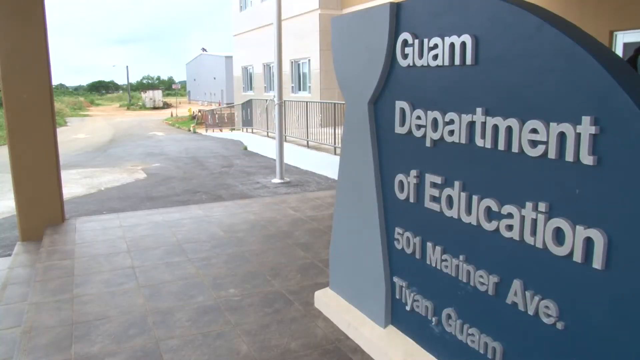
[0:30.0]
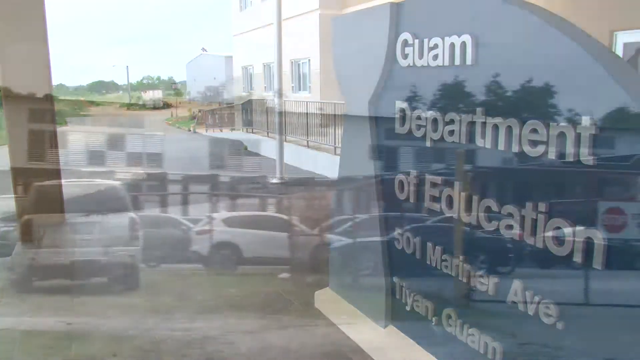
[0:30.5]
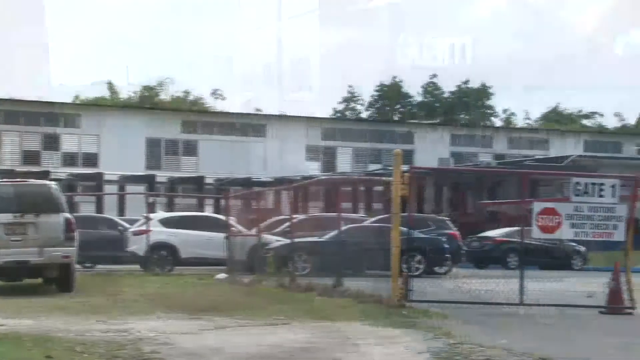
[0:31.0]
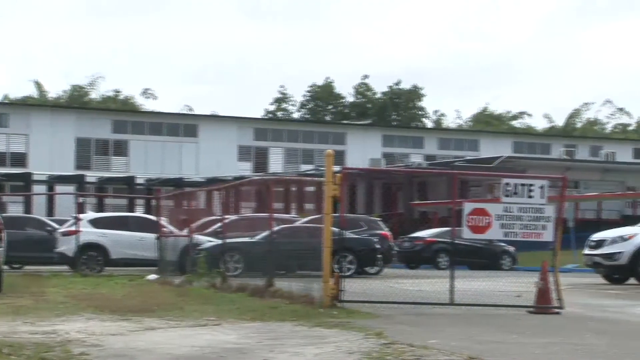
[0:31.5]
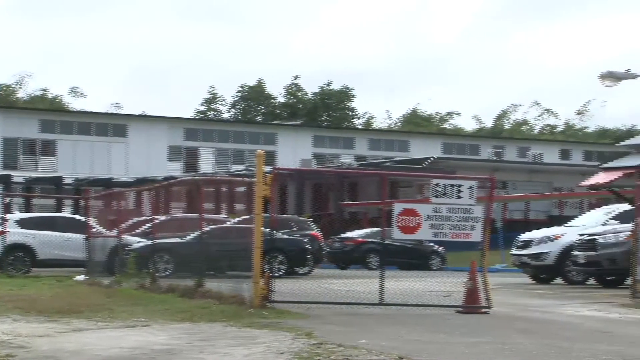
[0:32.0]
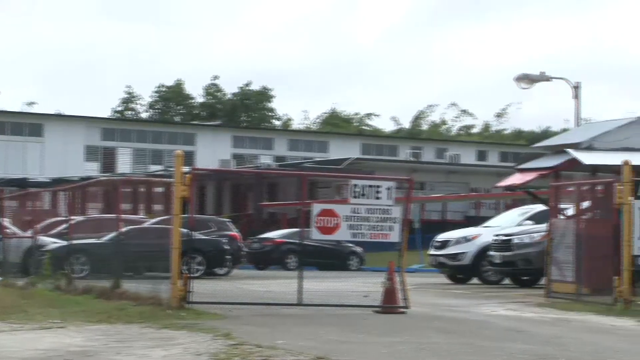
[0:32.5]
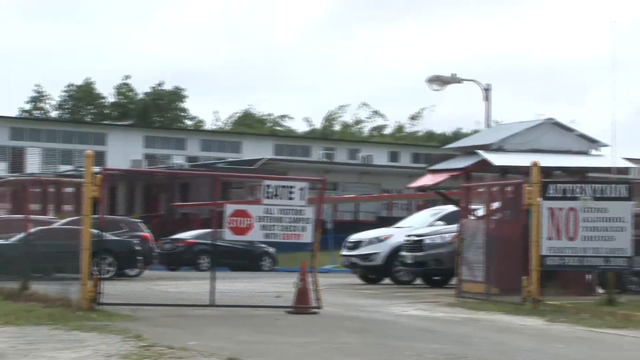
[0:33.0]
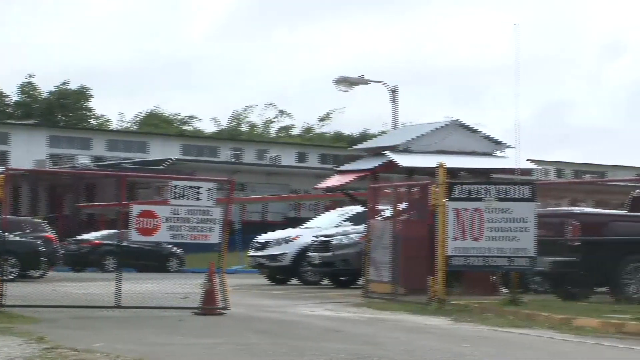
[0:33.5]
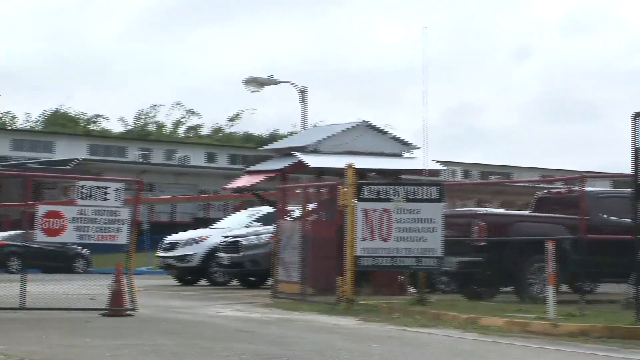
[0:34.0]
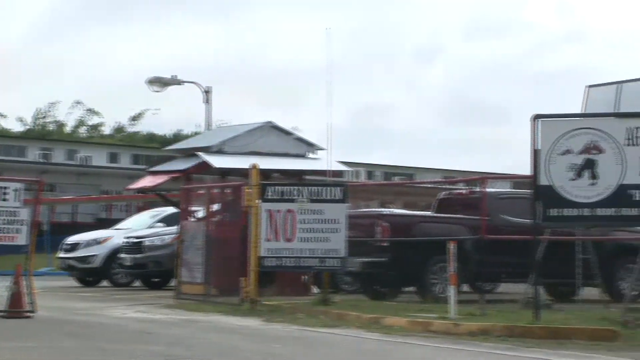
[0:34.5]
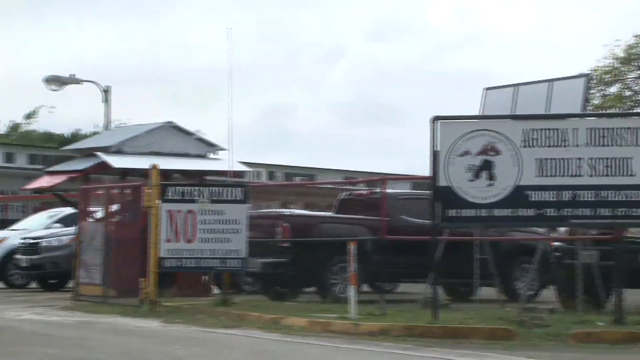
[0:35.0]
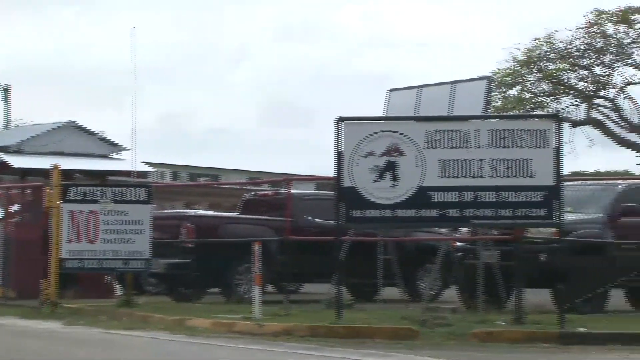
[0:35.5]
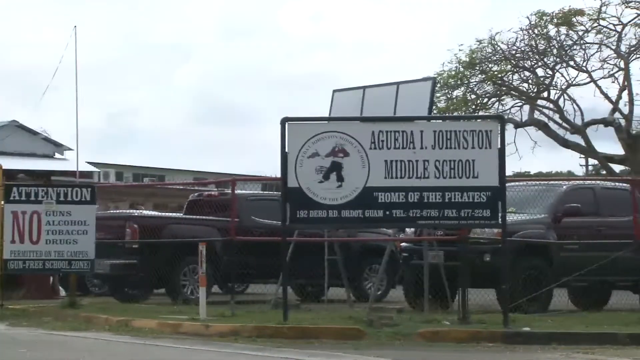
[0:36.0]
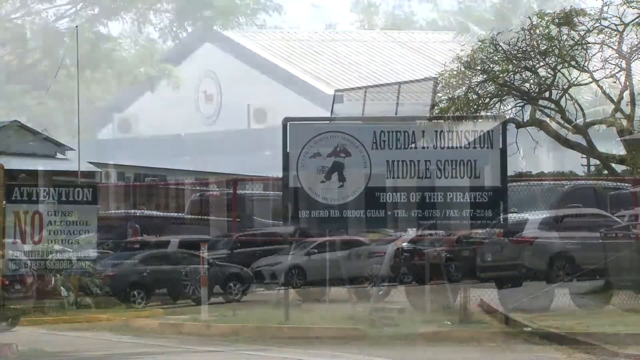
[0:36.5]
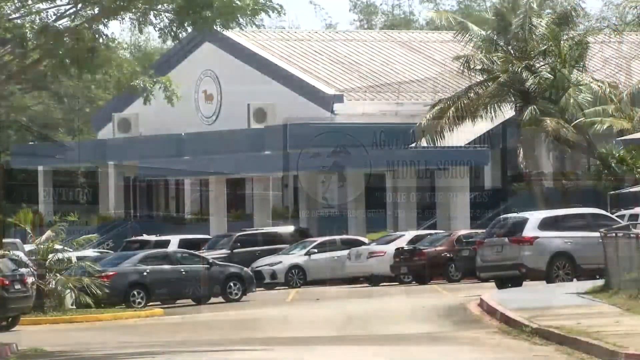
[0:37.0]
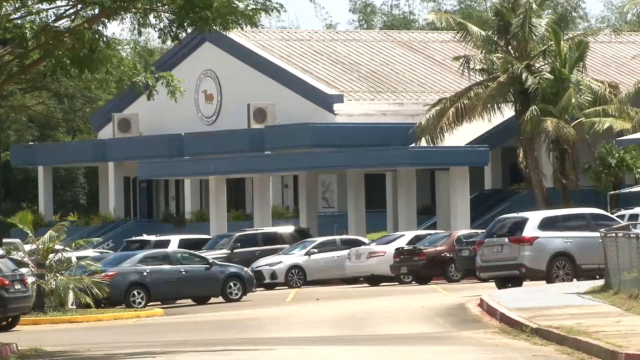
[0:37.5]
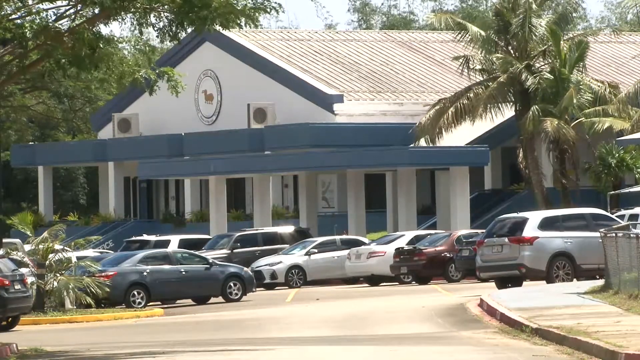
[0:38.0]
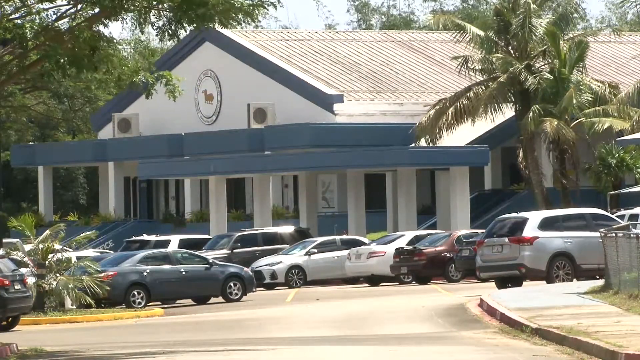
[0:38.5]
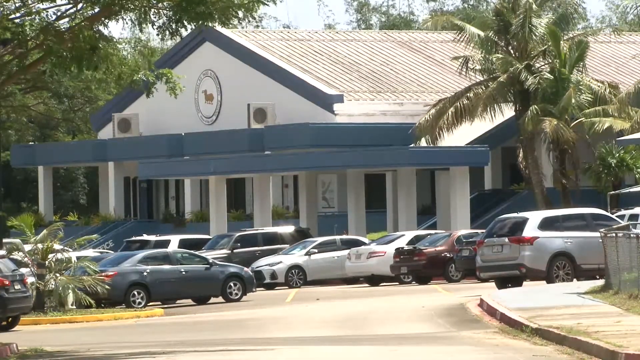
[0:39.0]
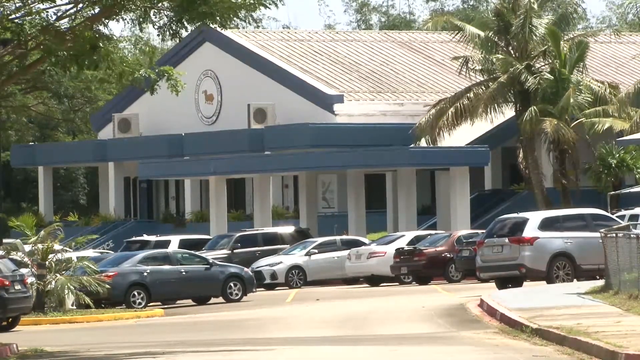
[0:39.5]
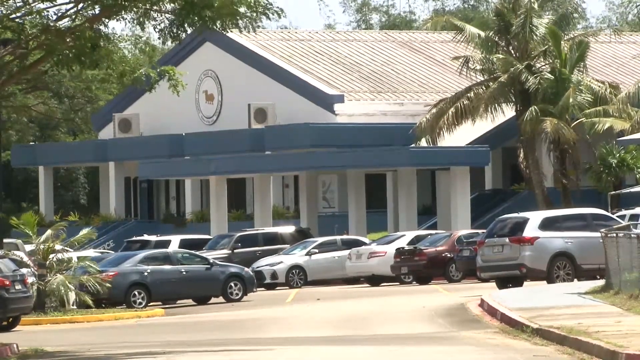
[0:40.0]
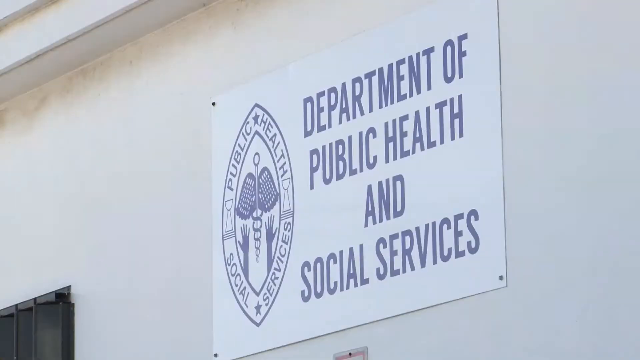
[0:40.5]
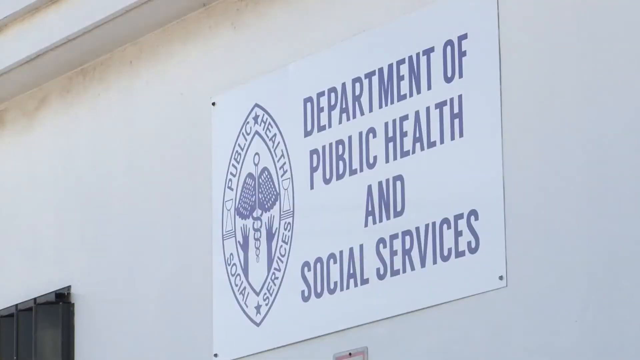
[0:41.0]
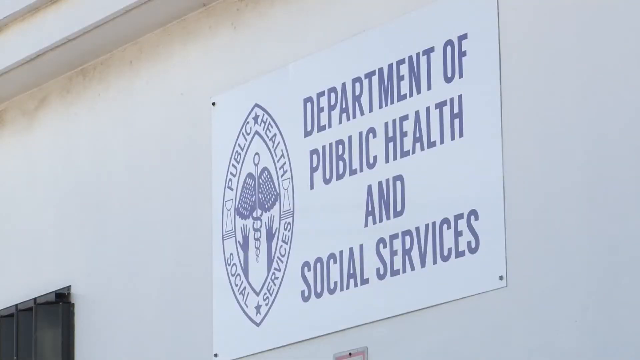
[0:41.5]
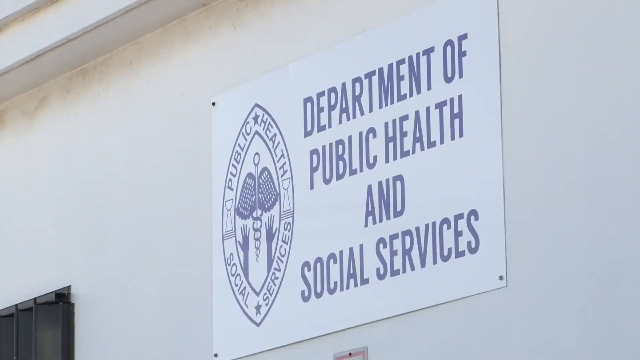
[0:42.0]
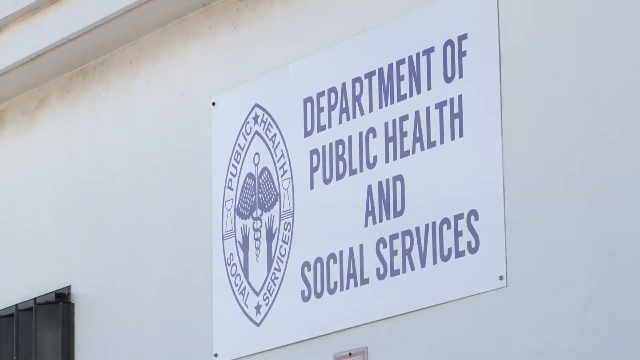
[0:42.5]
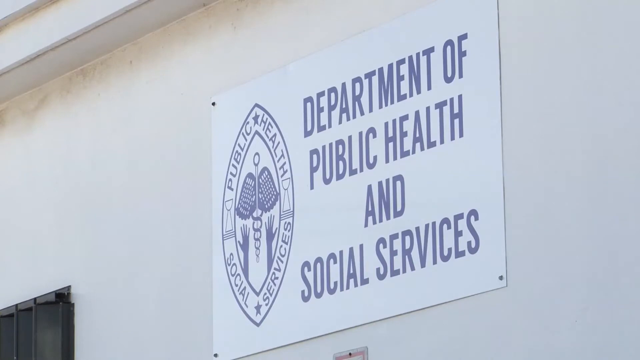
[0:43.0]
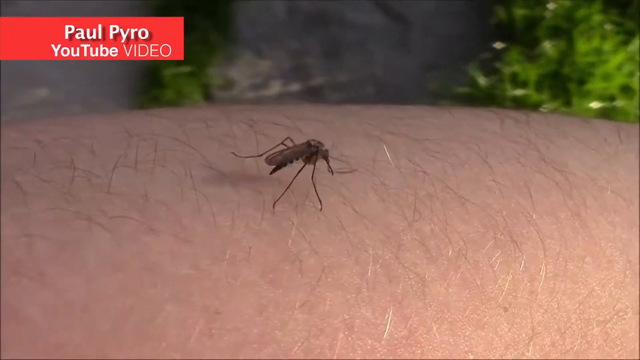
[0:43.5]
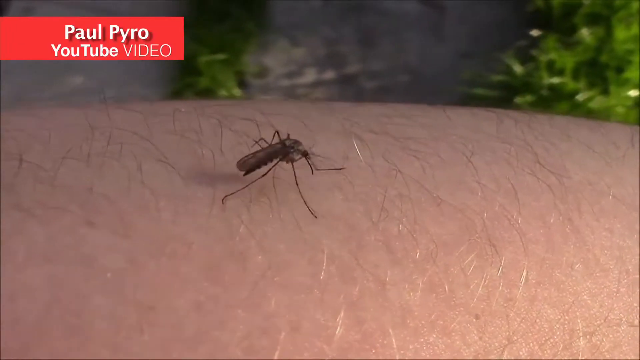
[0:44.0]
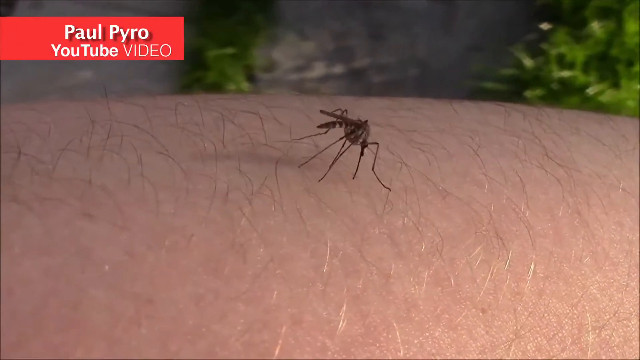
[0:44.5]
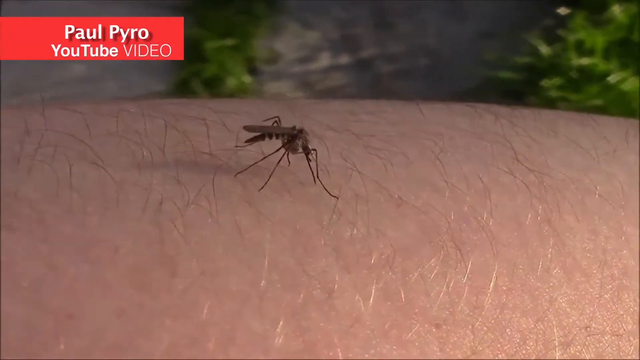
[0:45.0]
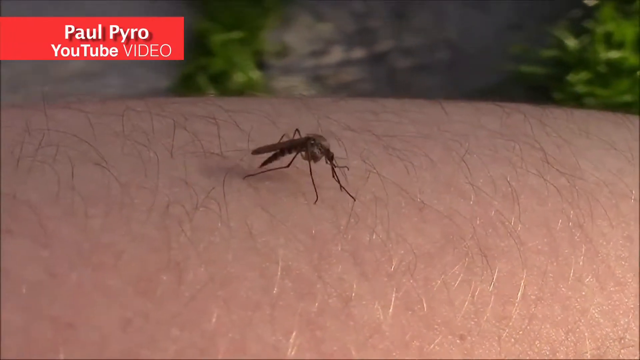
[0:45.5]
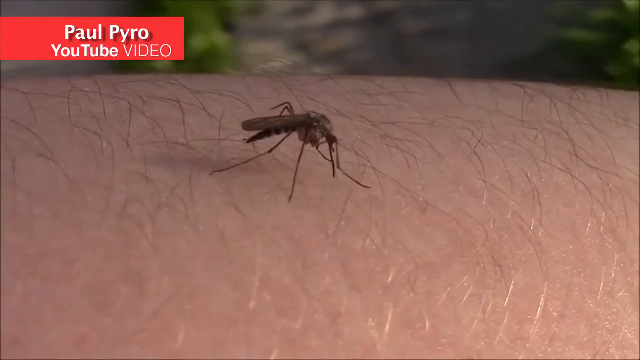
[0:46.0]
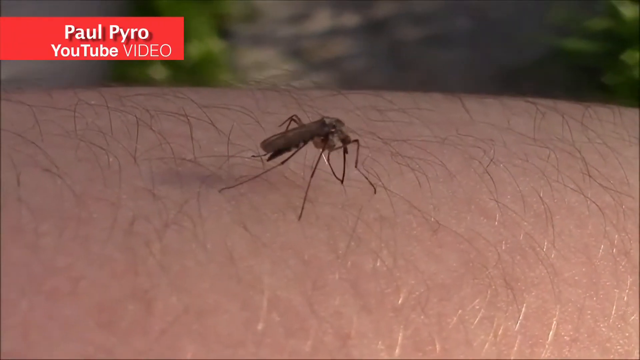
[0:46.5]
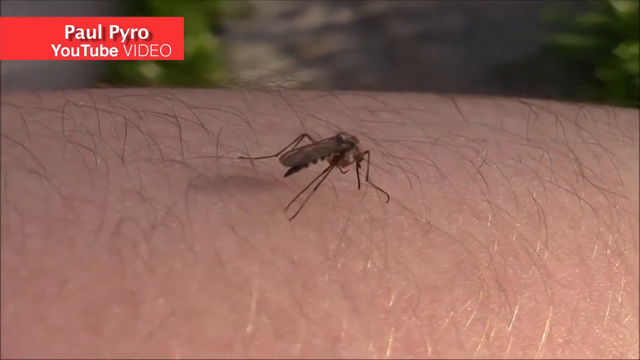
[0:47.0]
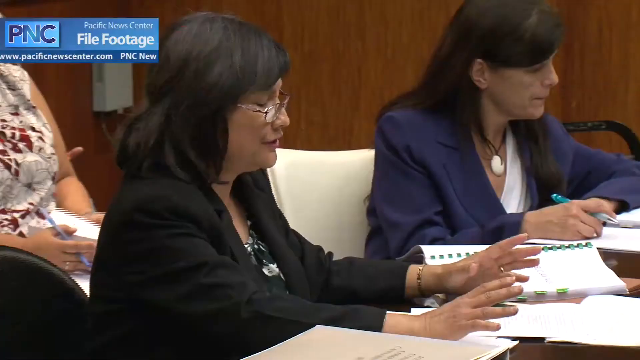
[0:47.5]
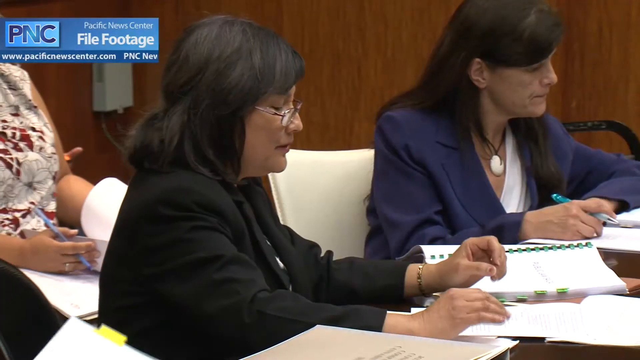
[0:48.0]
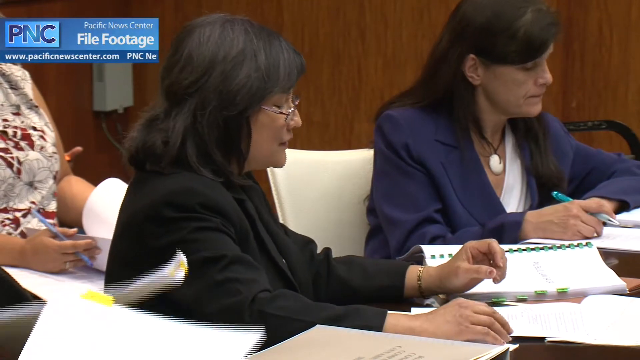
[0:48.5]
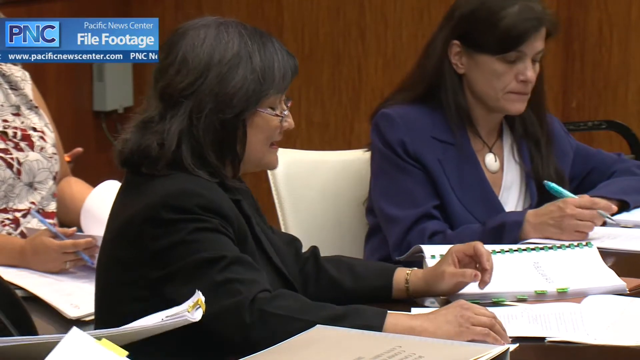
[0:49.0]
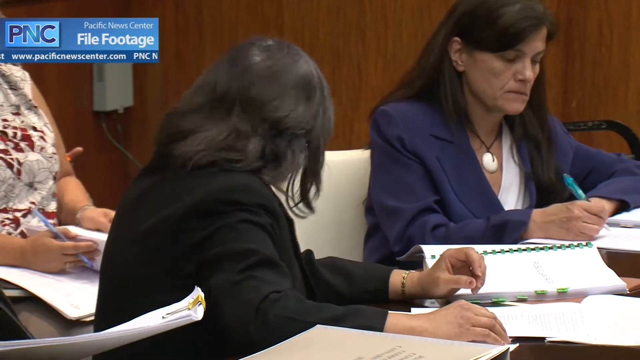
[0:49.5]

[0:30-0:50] The video begins with a sign outside of a building that reads "Guam Department of Education." It is a government building and a secure building. A Department of Public Health and Social Services building is also shown. A mosquito is then shown crawling on a person's arm, apparently as part of a public health warning about the dangers of mosquito bites. Another scene appears to show a public meeting, where the people, possibly health officials, politicians or both, are having a meeting.